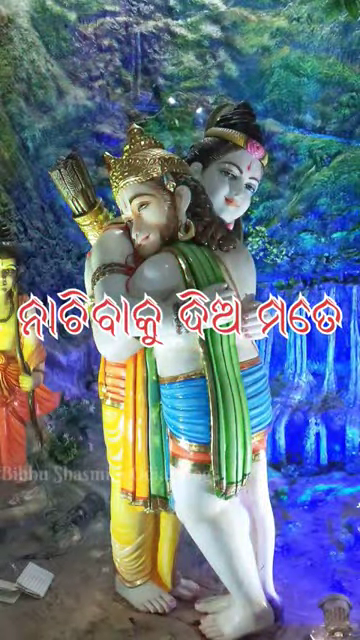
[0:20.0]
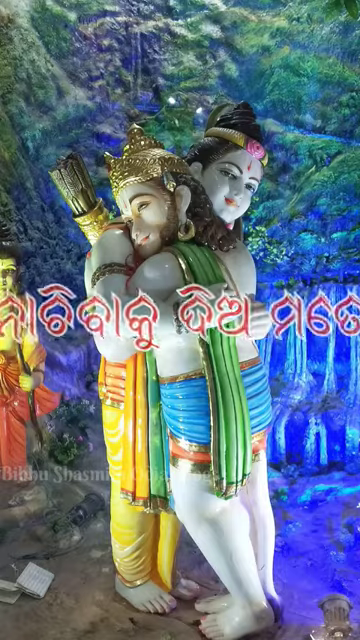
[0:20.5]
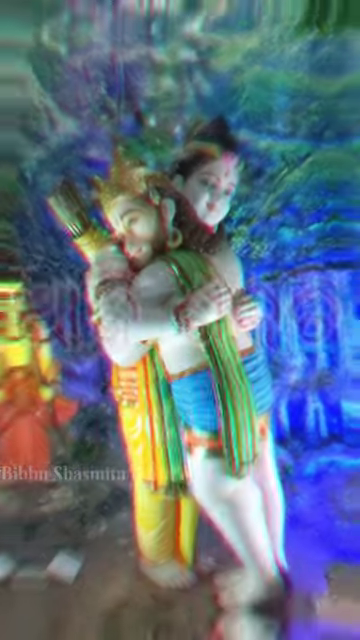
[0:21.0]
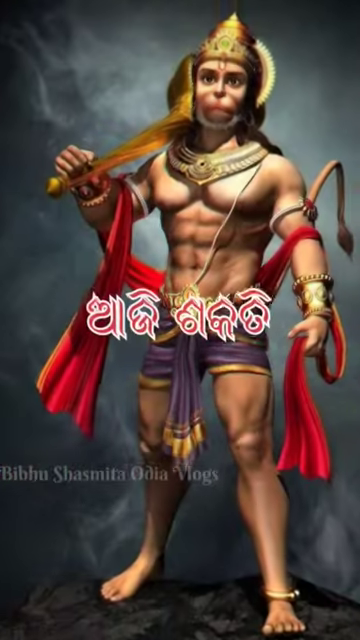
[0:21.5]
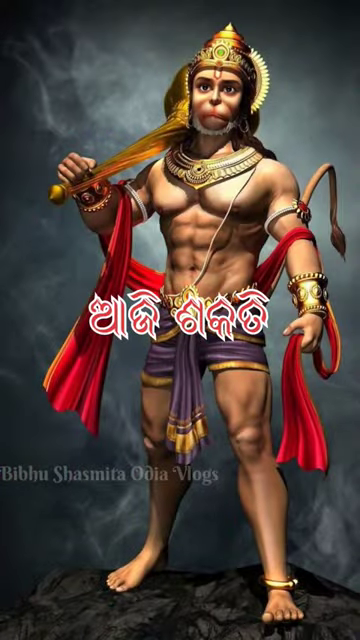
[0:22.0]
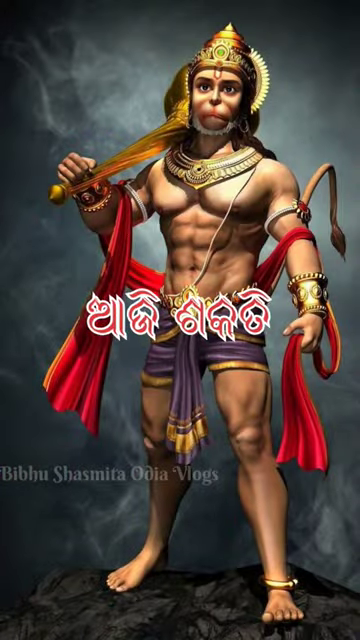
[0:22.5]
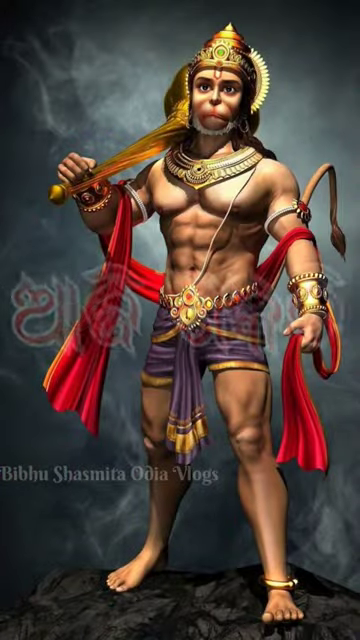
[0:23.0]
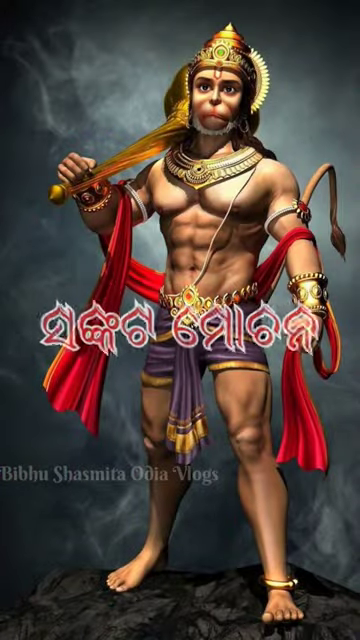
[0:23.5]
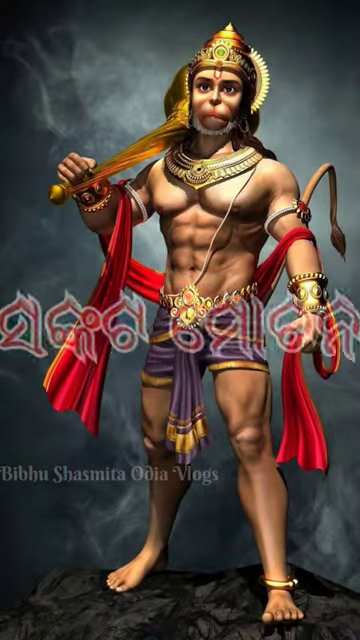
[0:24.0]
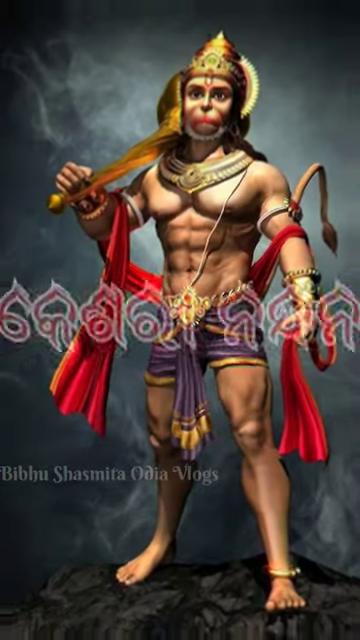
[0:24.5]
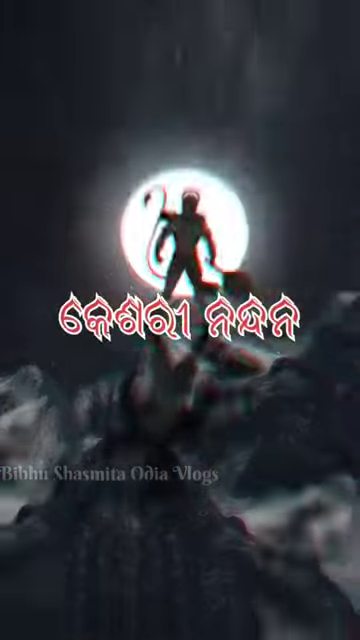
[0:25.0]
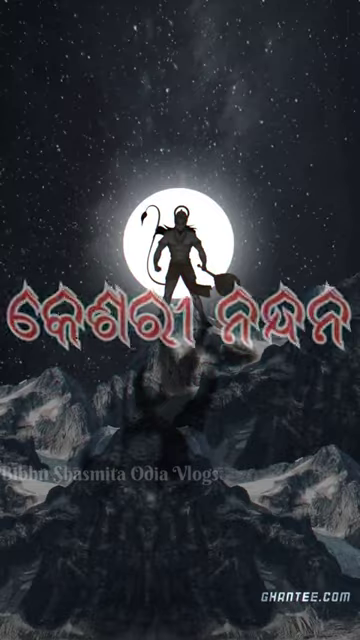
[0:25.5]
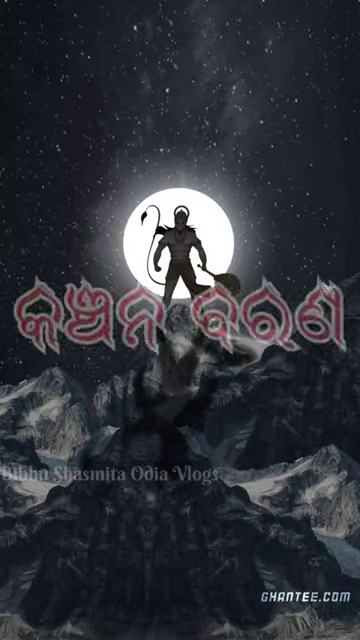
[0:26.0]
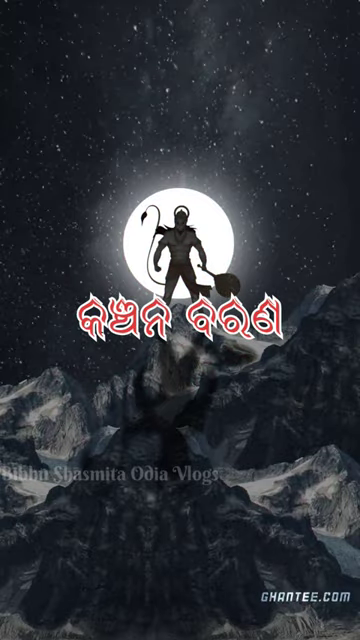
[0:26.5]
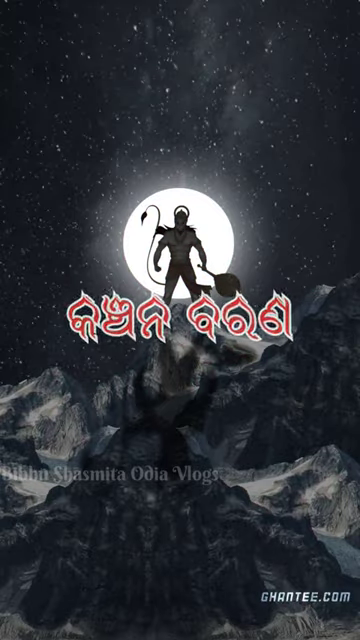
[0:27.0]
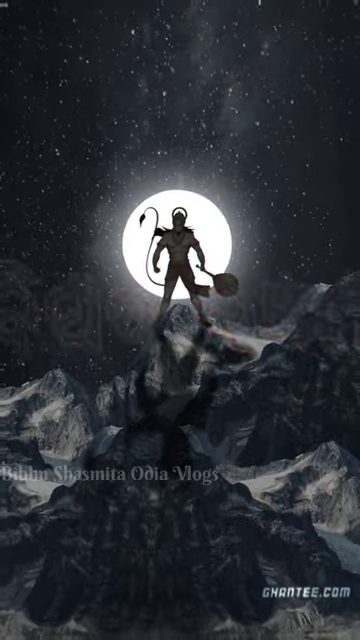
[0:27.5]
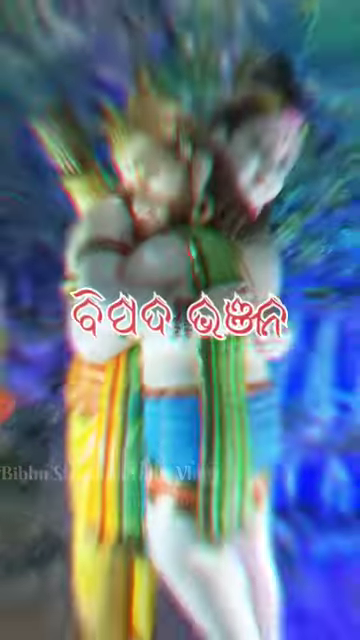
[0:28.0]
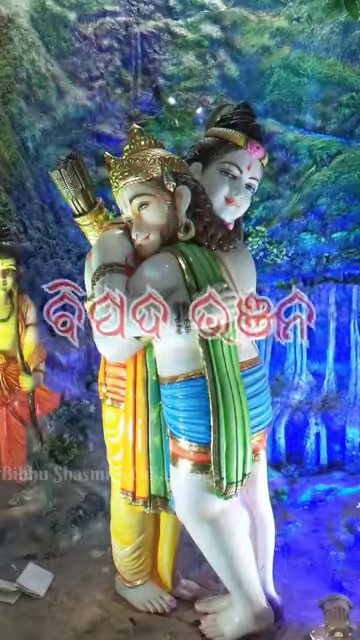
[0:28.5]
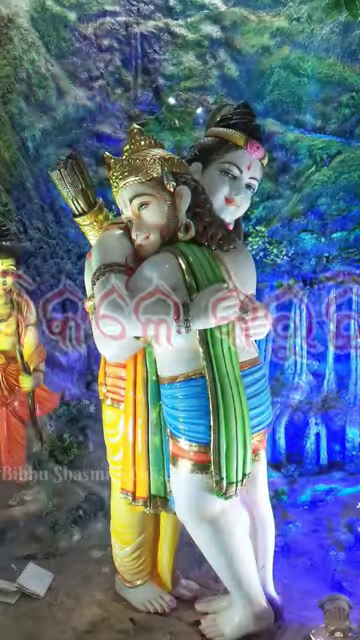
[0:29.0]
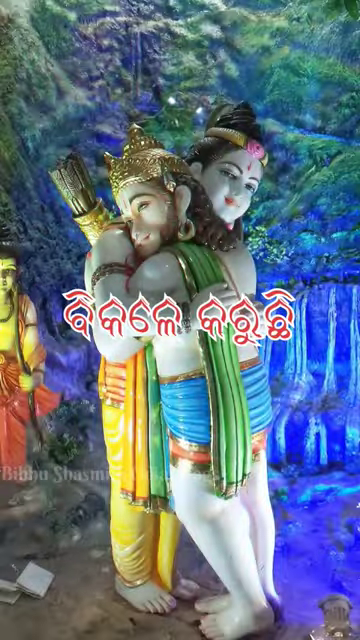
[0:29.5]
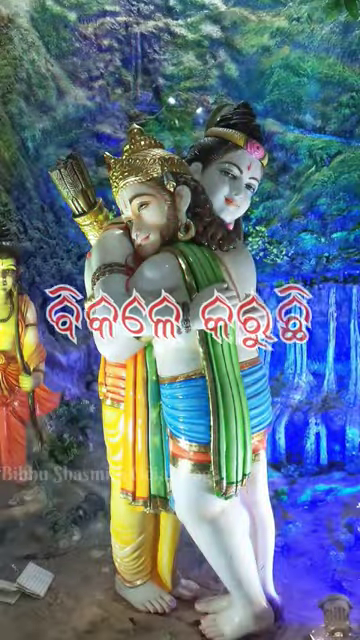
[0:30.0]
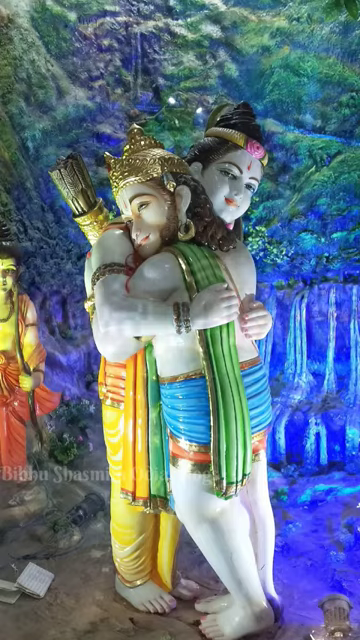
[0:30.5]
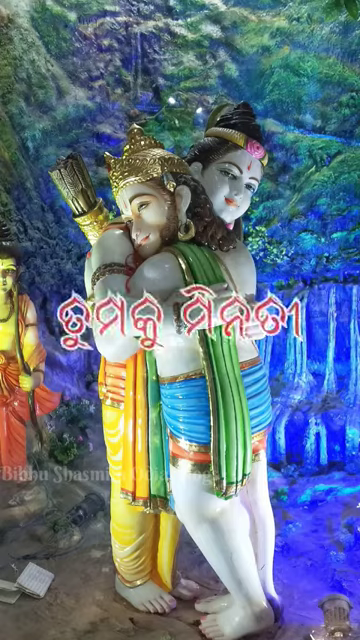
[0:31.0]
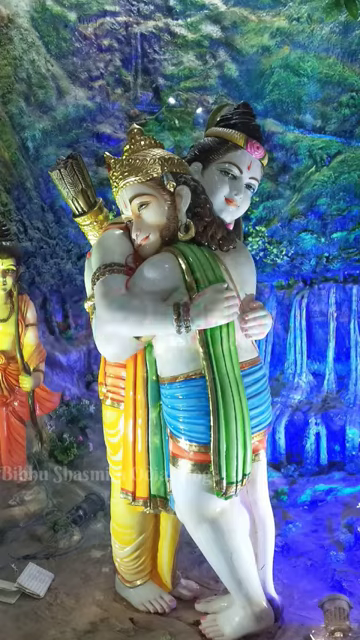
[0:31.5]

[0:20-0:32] Red and white foreign letters still appear in the center of the screen, zooming in and out; they appear to be either the same or different letters each time. A website, "ghantee.com", is shown on one of the images. The same images appear again but in a different order. On one of the images, white text at the bottom corner of the screen reads "Bibbu Shasmita Odia Vlogs".